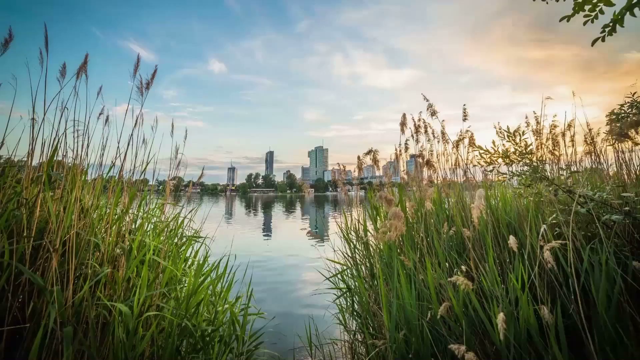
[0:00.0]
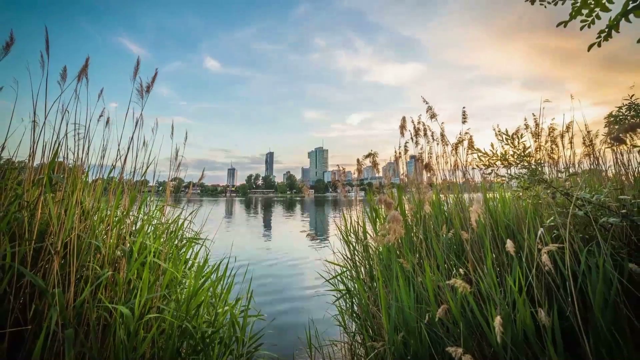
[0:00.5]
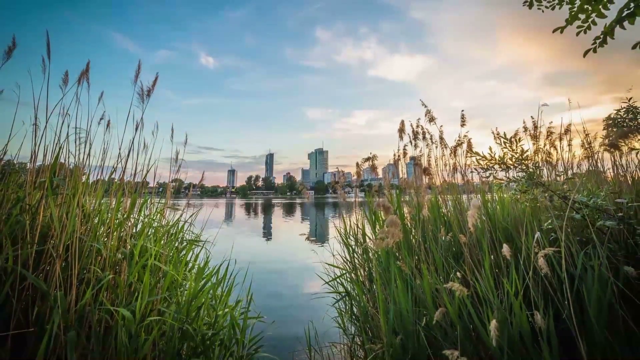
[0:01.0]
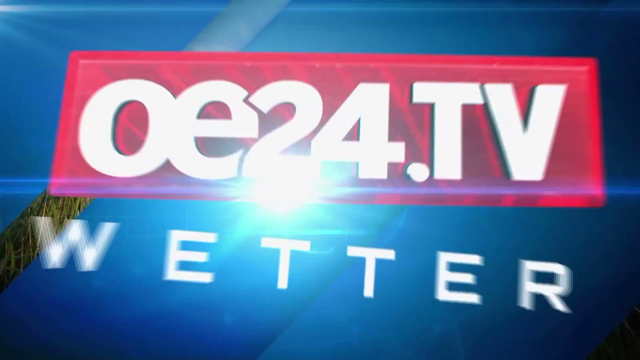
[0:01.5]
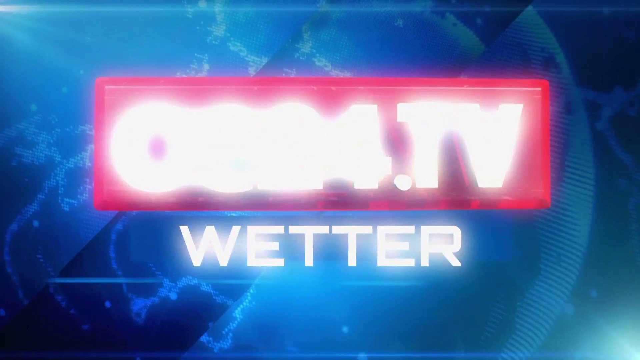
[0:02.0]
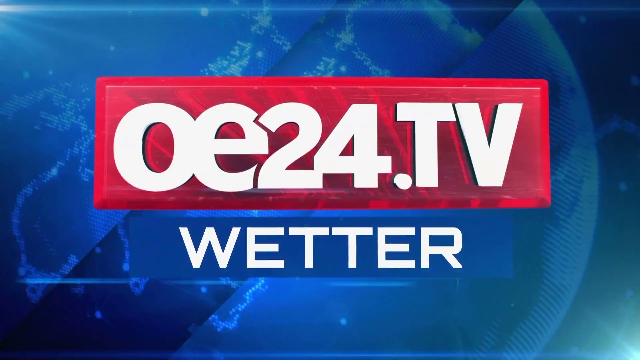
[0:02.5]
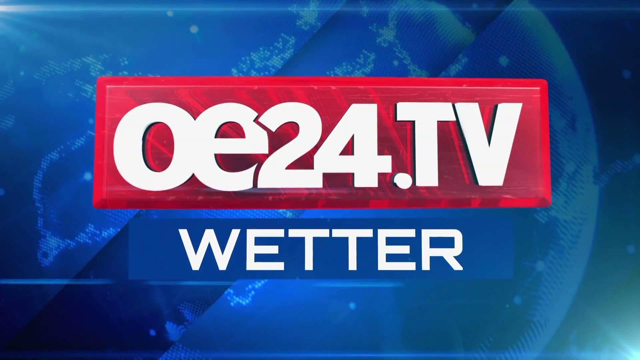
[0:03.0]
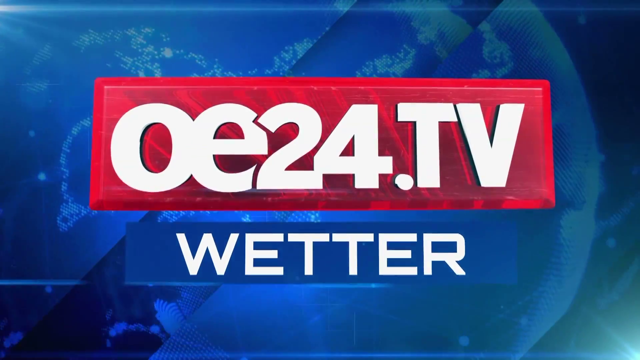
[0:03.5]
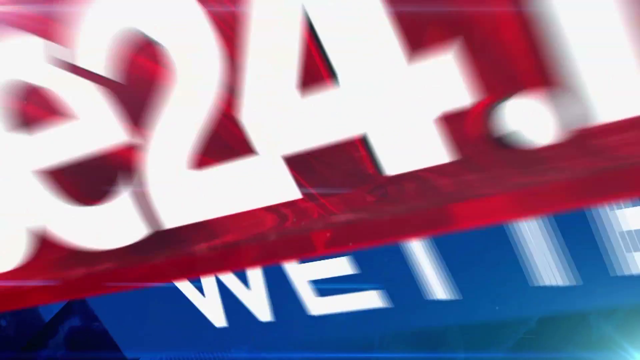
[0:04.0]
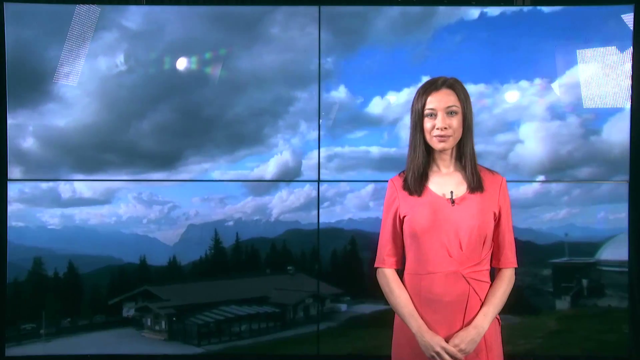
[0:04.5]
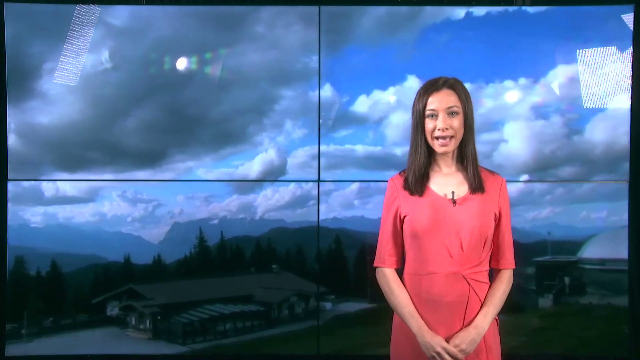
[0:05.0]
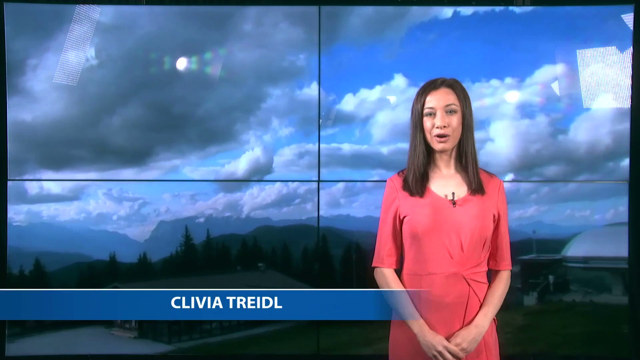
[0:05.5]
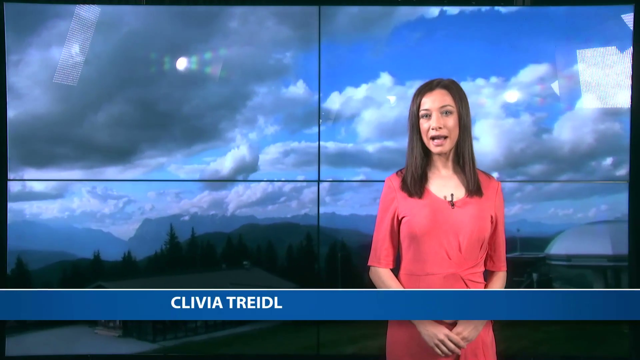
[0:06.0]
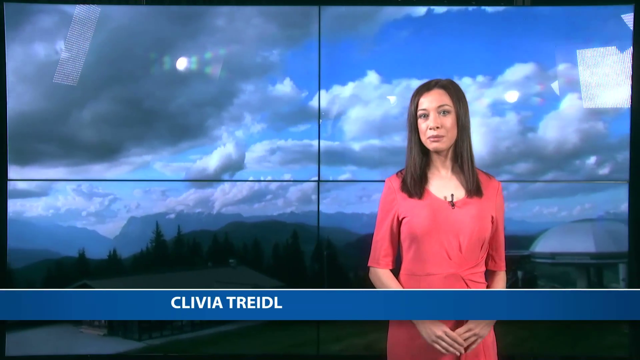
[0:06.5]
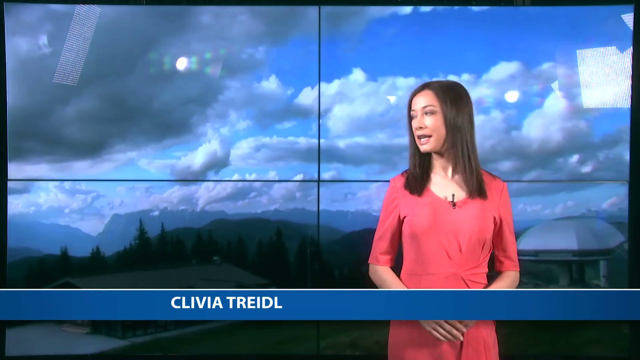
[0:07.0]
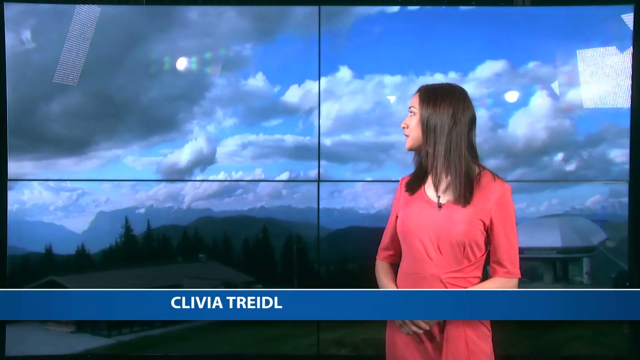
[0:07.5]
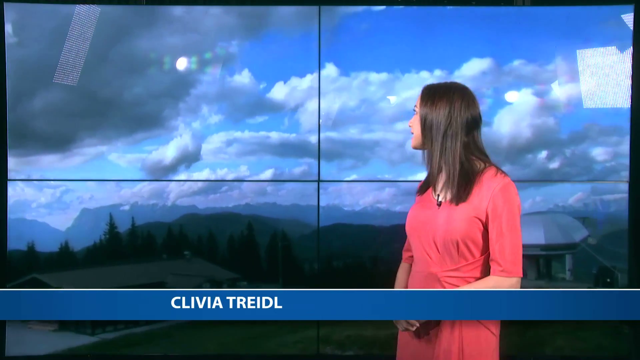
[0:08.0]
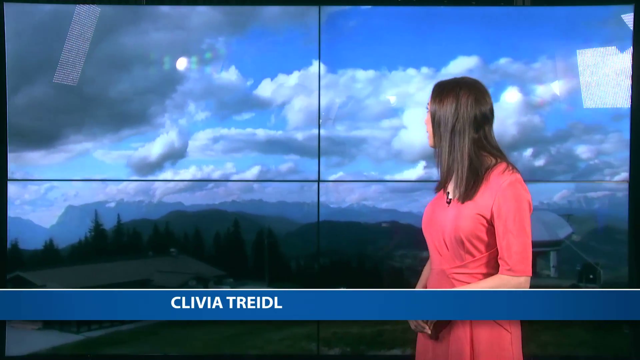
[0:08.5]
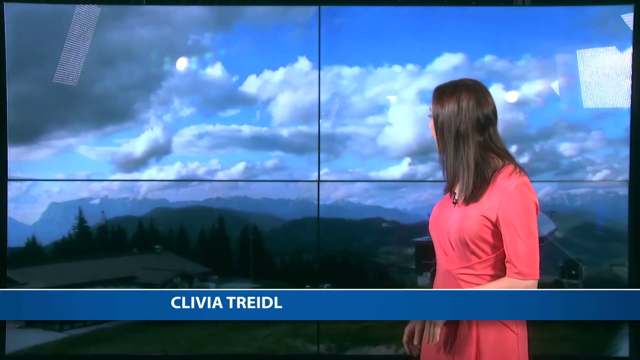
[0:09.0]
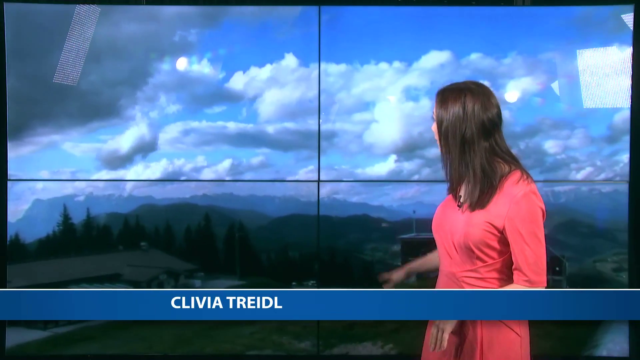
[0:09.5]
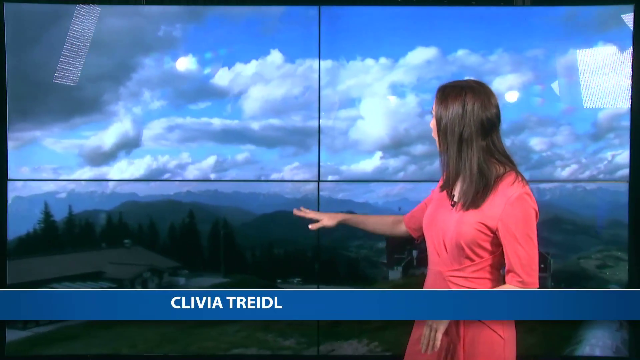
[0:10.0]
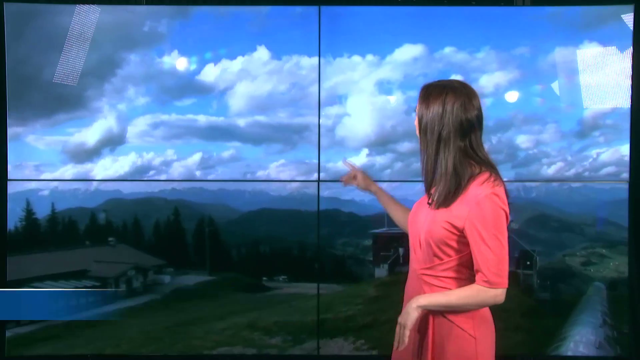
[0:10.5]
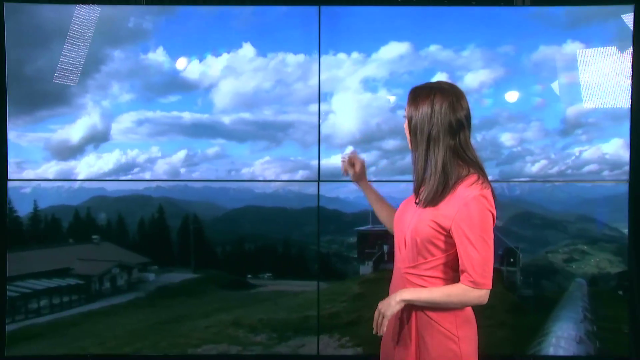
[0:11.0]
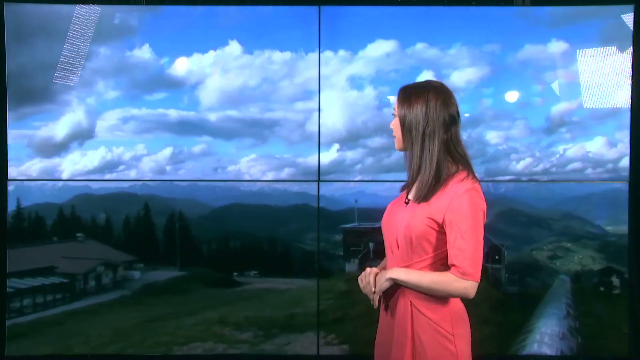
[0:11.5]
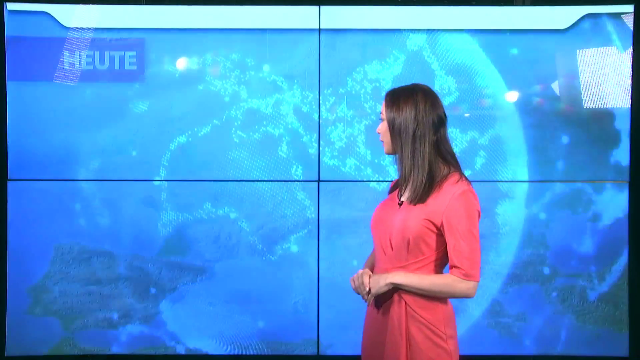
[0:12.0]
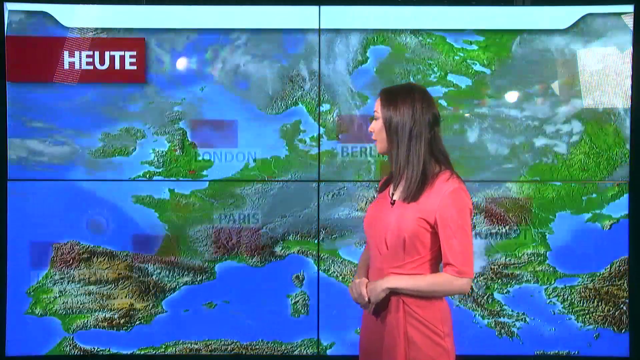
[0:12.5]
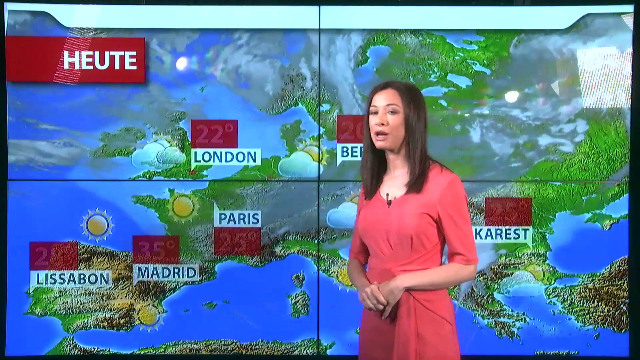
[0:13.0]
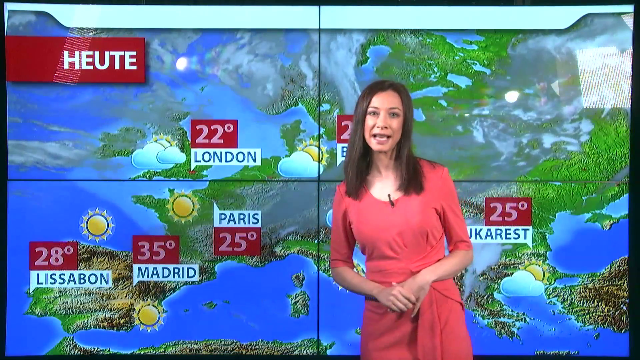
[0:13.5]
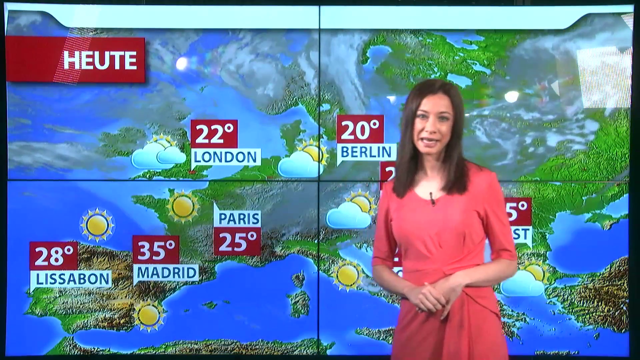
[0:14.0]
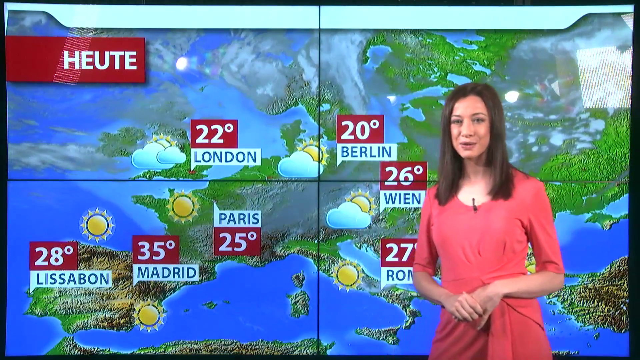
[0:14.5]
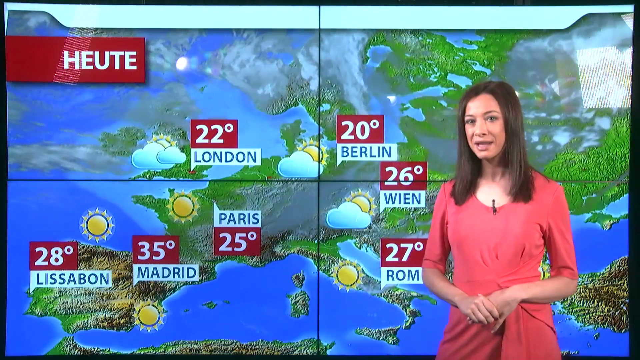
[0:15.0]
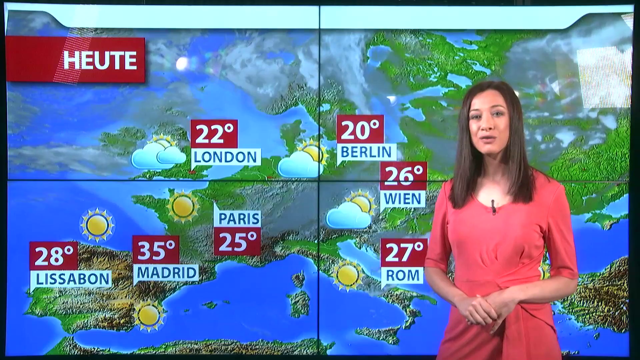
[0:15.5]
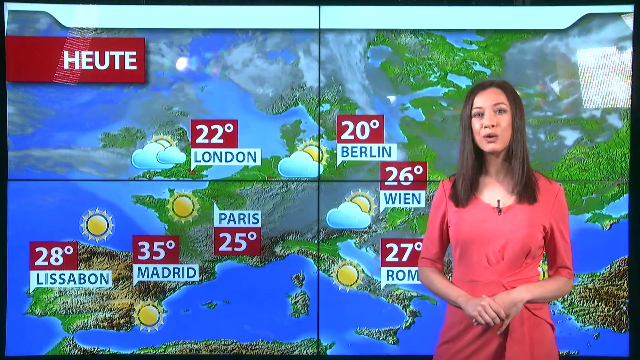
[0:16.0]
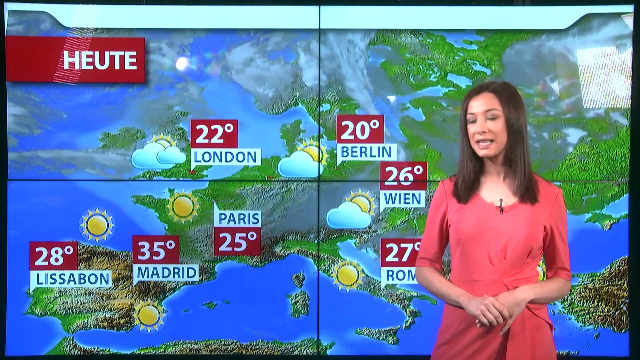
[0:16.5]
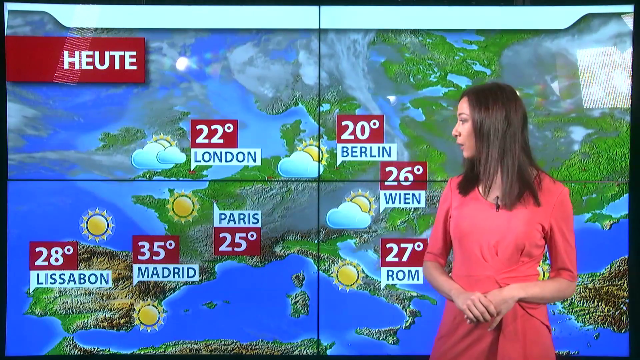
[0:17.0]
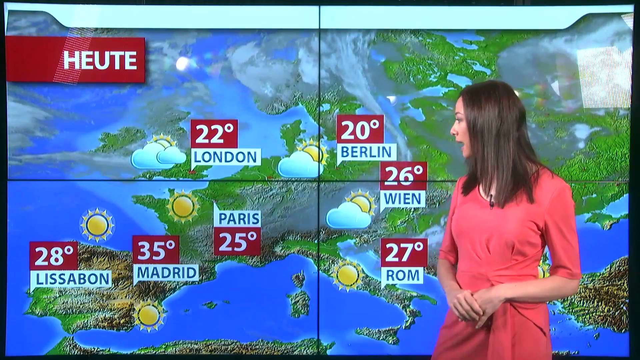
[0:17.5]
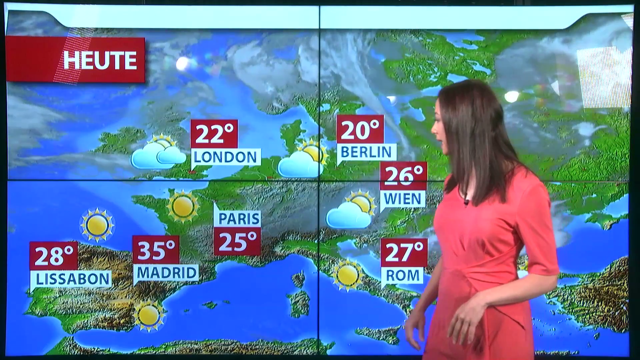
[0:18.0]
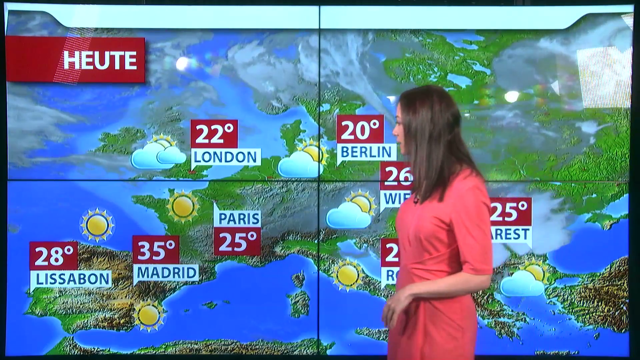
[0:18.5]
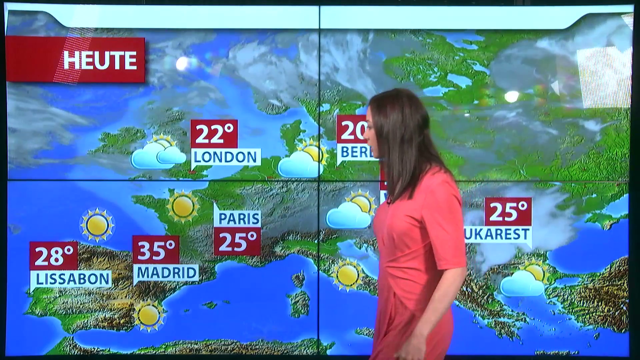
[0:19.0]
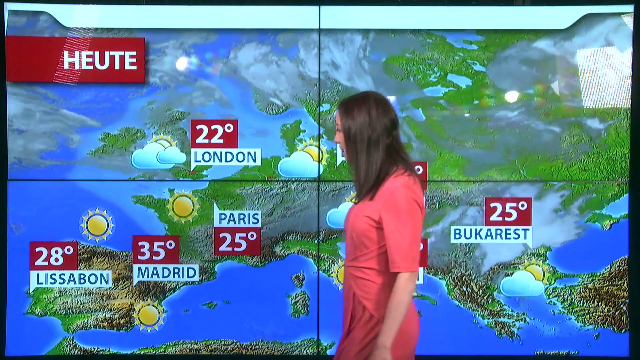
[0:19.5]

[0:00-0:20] The video opens on a nature scene: there is greenery and bushes on the left and greenery and bushes on the right, and in the middle is an opening going into the lake. In the far distance there are tall buildings, and the tall buildings are reflecting on the water. The sky is blue, and on the other end it seems golden brown, as if approaching sunset. This is OE24 TV weather.